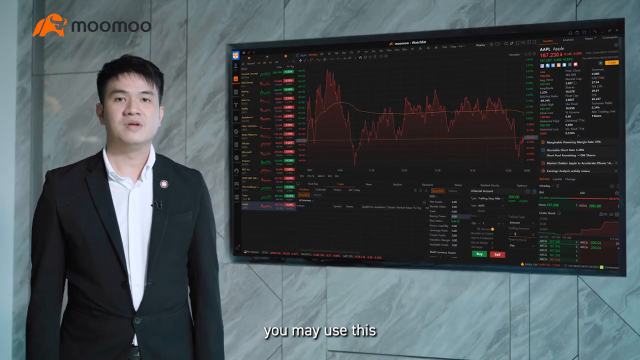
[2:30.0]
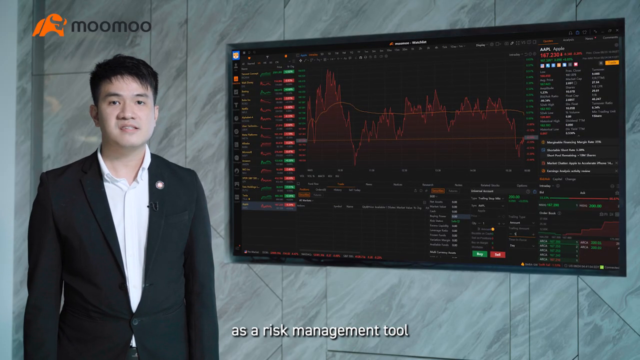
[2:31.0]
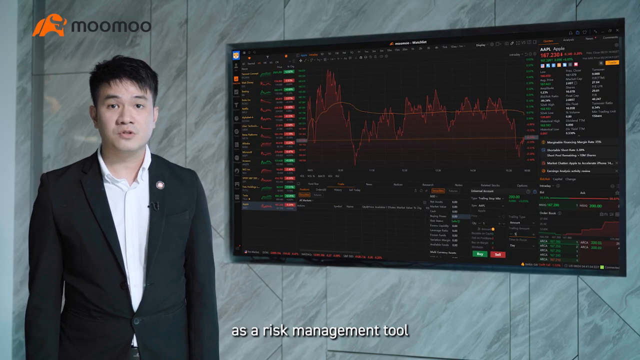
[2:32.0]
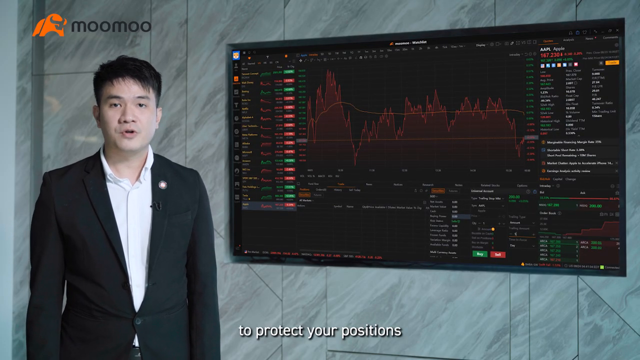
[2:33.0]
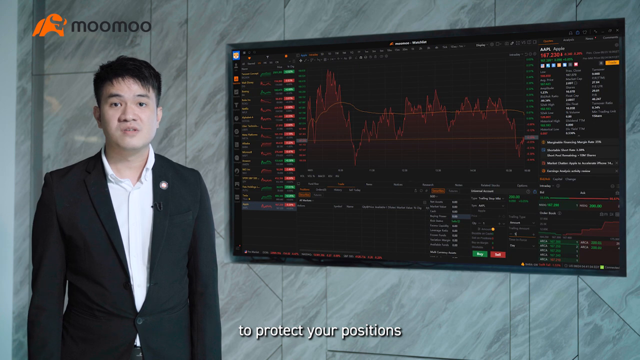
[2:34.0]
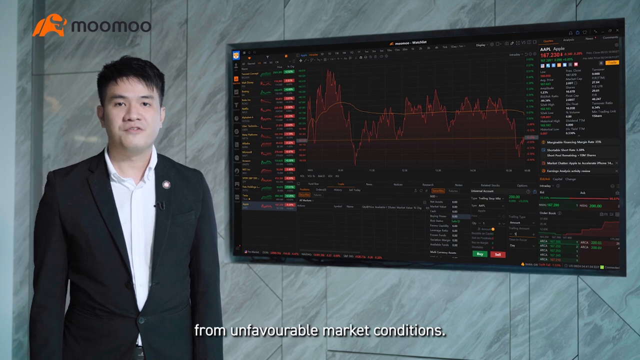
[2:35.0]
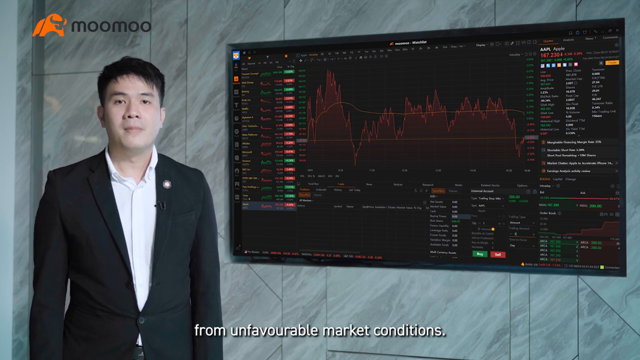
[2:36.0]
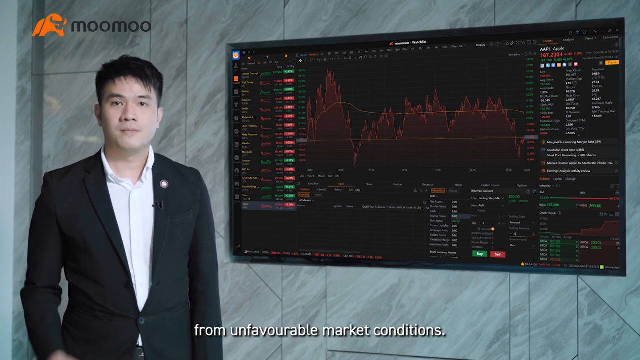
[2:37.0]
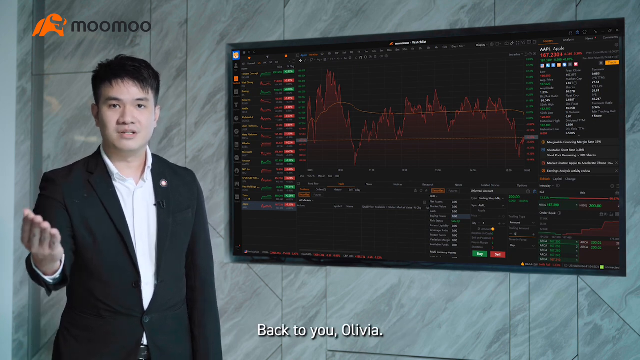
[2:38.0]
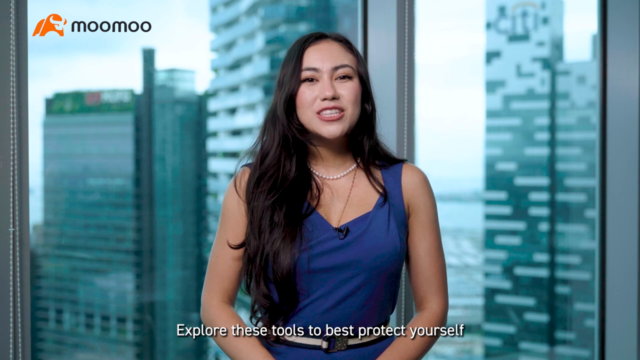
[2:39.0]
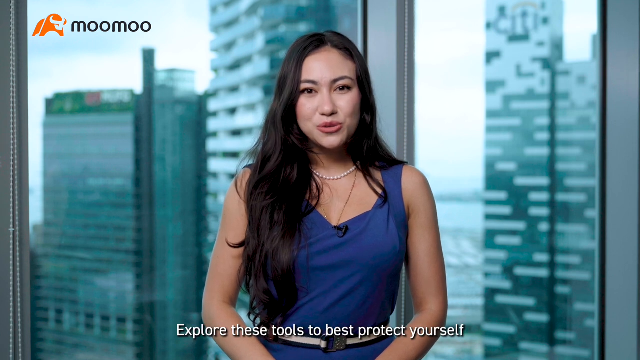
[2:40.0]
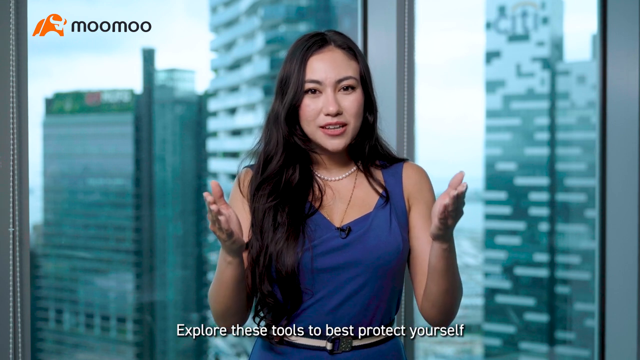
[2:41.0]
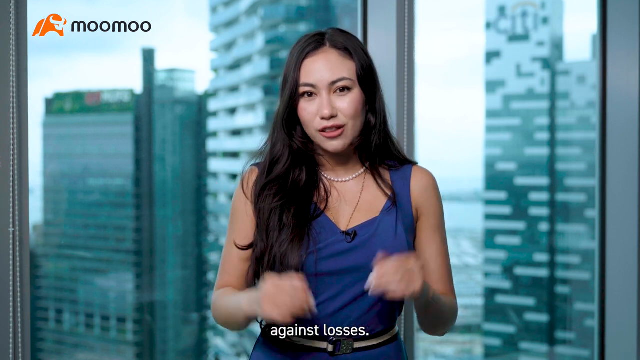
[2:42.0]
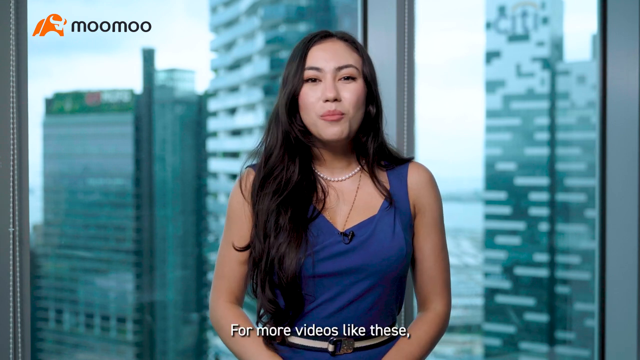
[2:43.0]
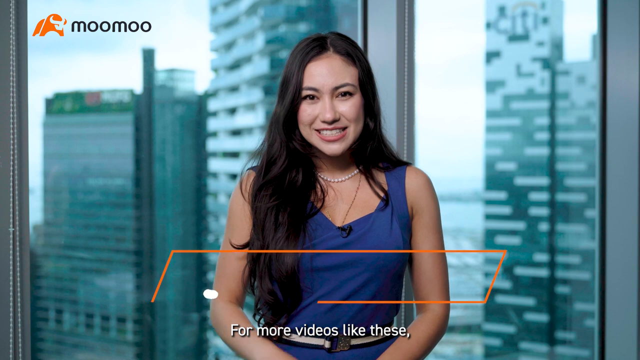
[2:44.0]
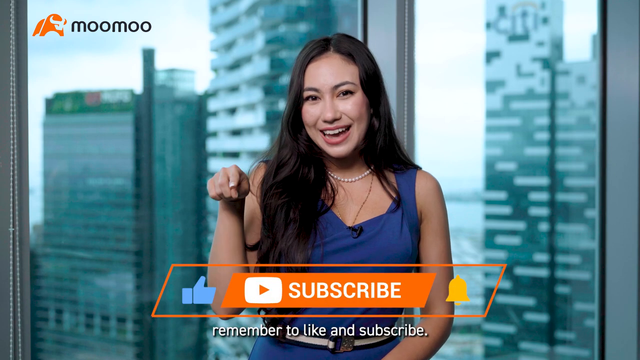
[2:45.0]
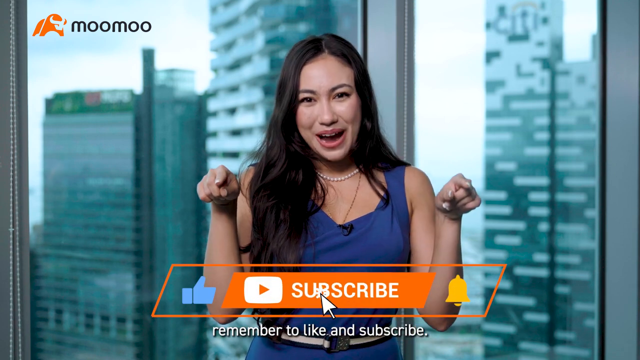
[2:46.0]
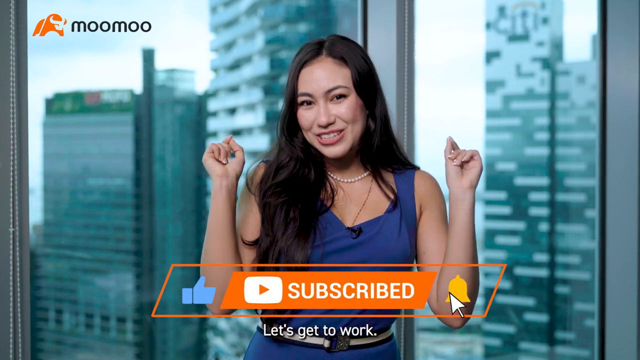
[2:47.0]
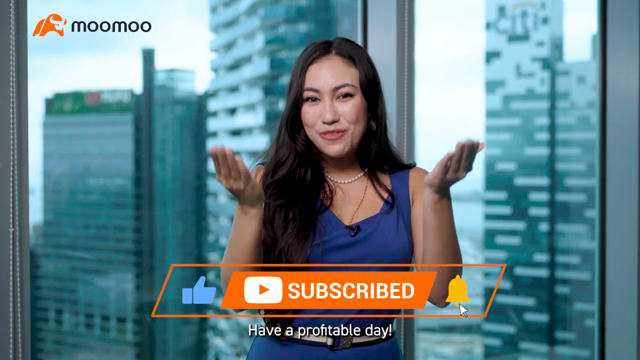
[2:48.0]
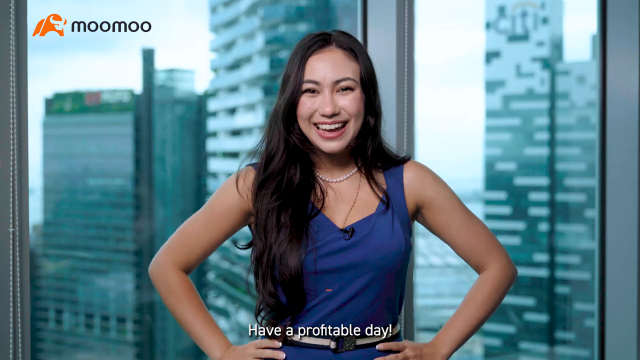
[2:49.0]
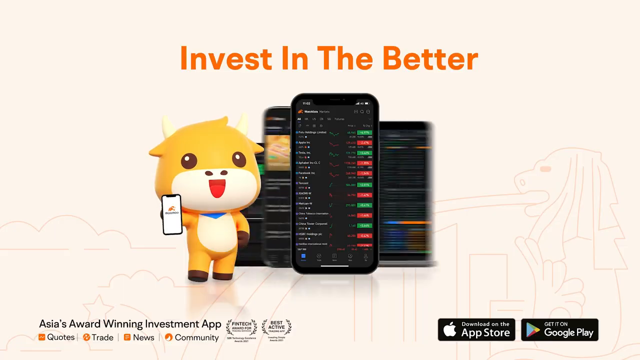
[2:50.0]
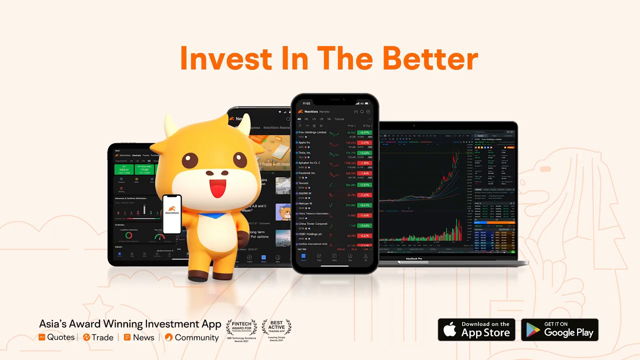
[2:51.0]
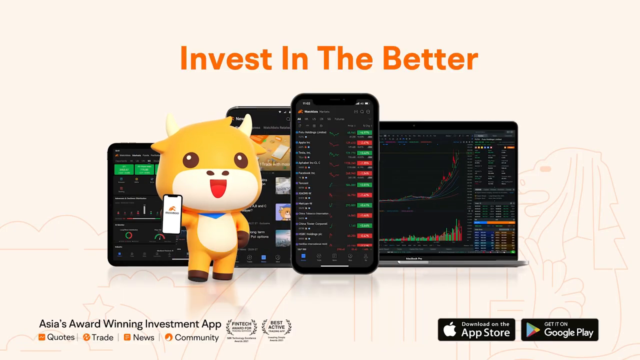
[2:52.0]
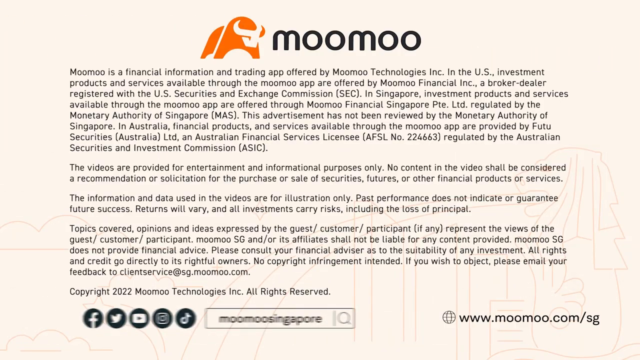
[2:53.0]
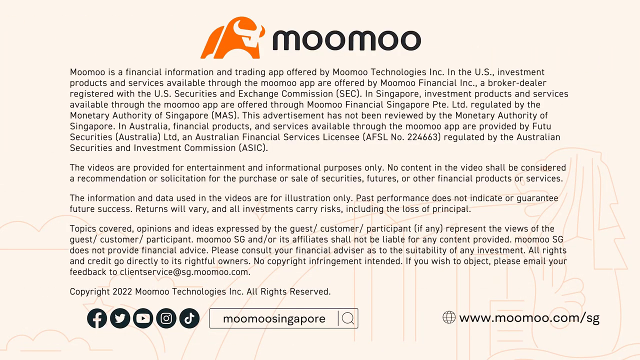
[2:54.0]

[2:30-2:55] Lee is explaining the screen, then hands over to Olivia, the news anchor in the blue dress with the pearl necklace and a black microphone clipped to her shirt, who wraps up the segment. The final screen shows a little yellow cow-like character and a phone with a white screen showing the MooMoo app; at the top, orange letters read "invest in the better." What appears to be an iPhone displays the app, with different stocks shown in red and green.